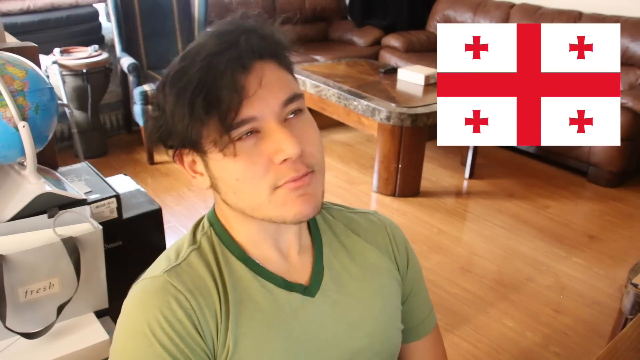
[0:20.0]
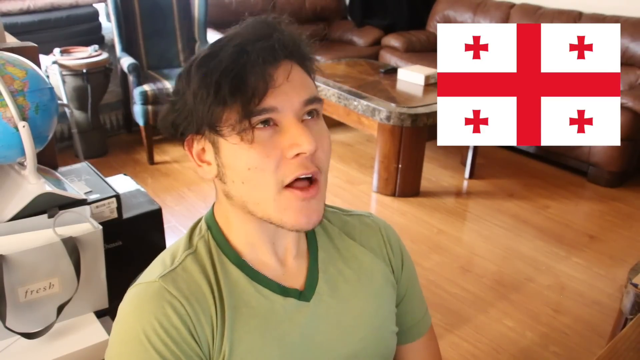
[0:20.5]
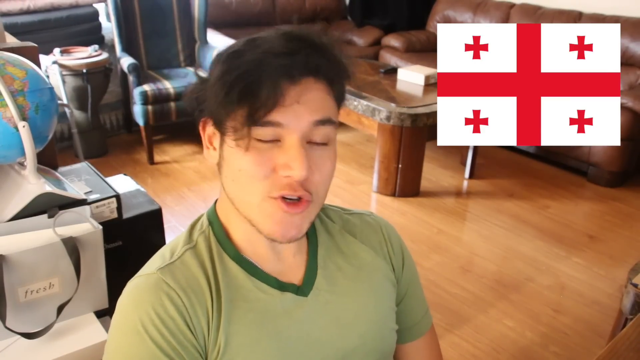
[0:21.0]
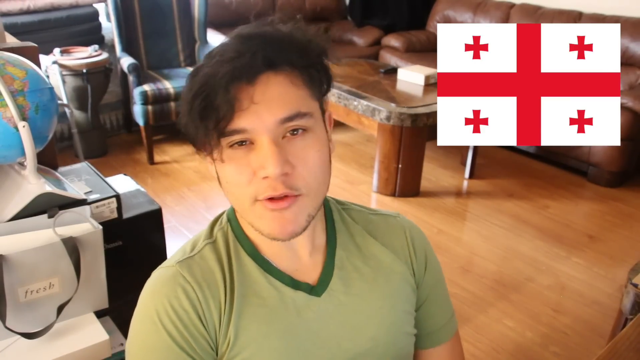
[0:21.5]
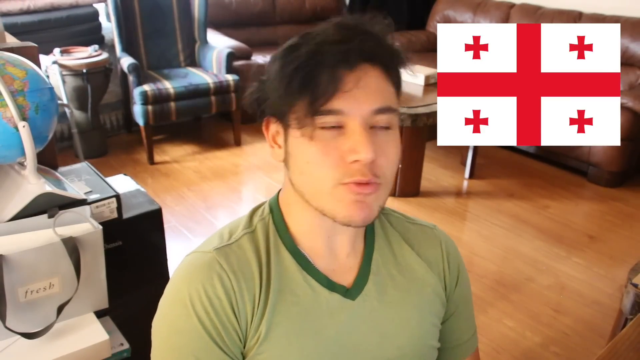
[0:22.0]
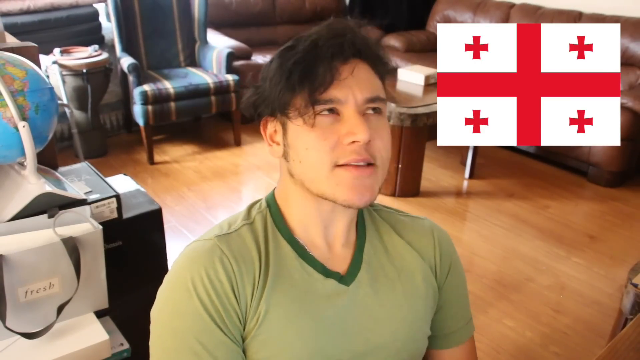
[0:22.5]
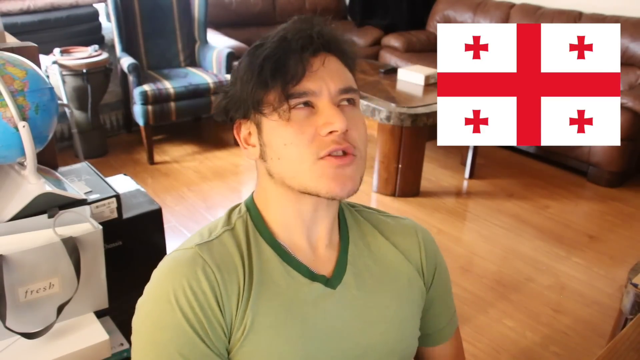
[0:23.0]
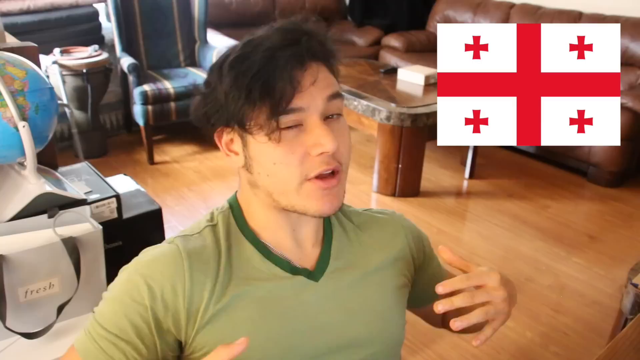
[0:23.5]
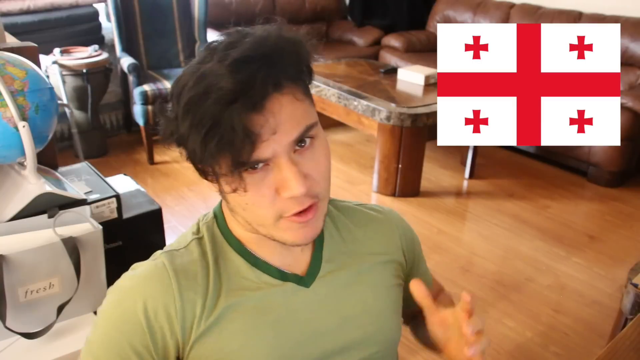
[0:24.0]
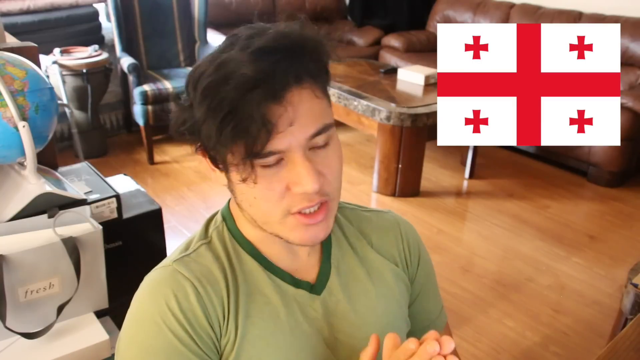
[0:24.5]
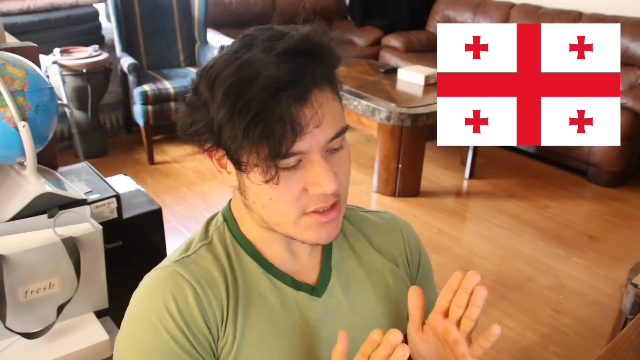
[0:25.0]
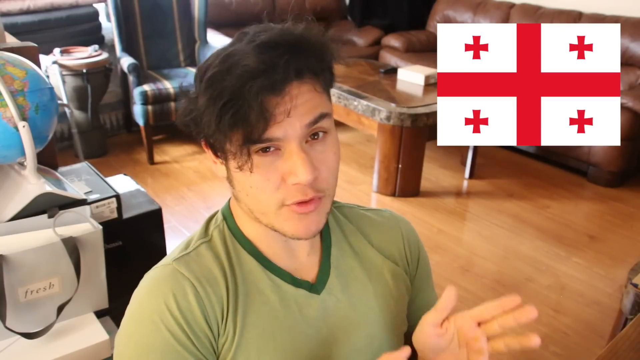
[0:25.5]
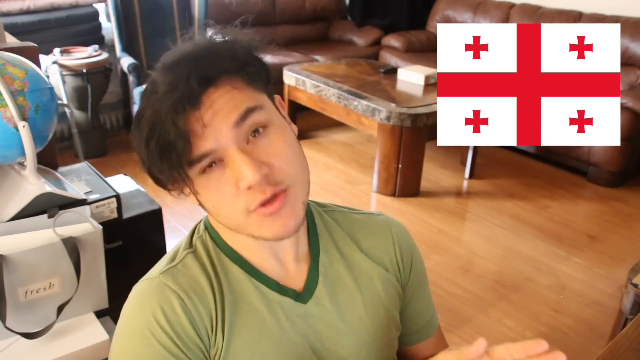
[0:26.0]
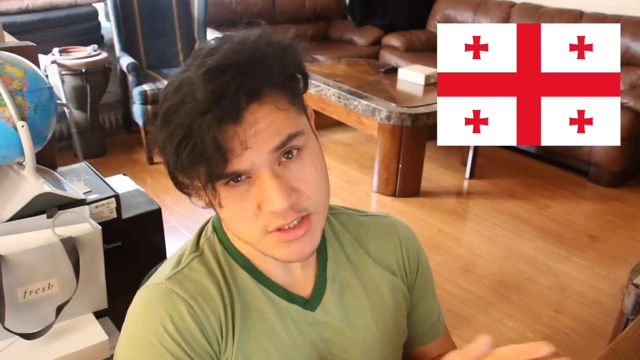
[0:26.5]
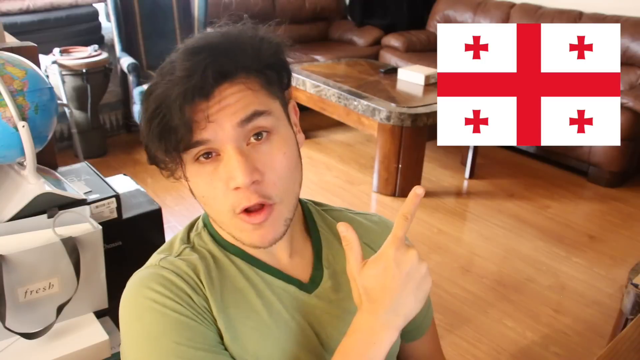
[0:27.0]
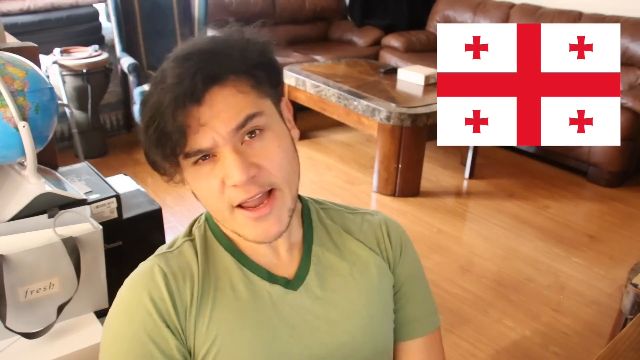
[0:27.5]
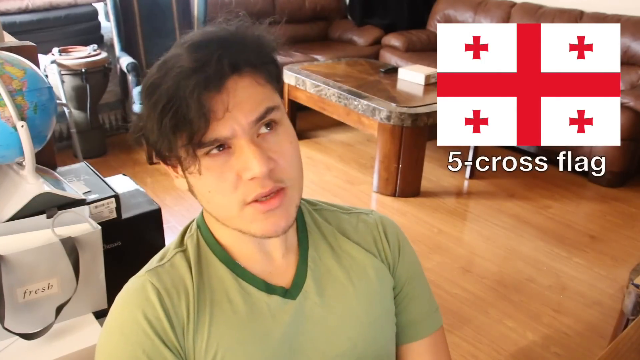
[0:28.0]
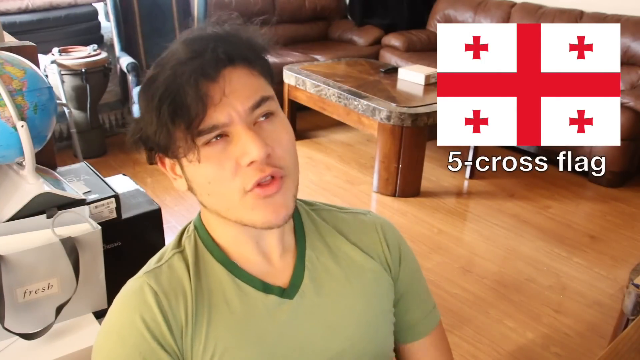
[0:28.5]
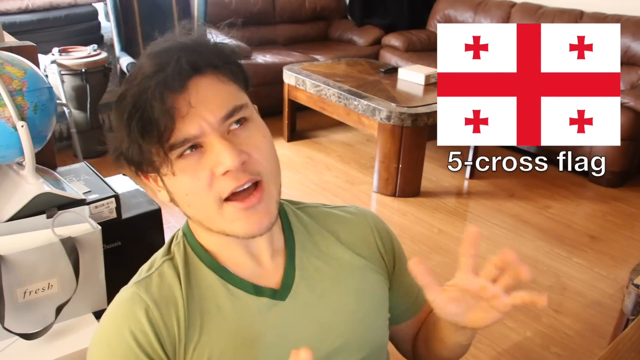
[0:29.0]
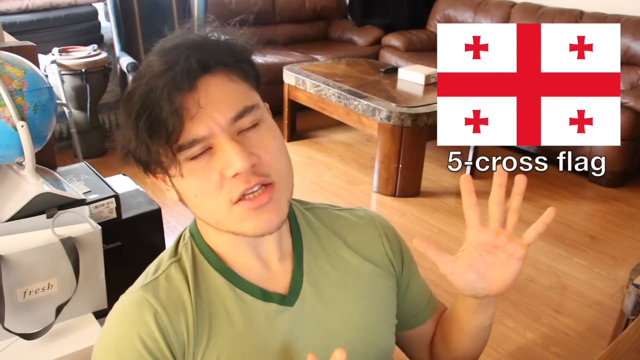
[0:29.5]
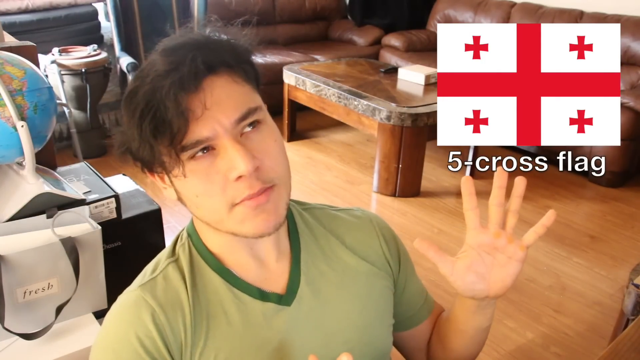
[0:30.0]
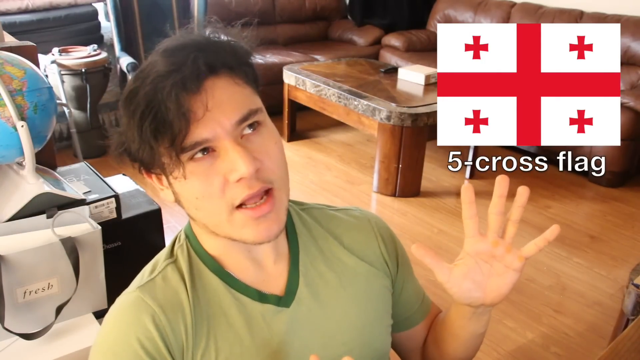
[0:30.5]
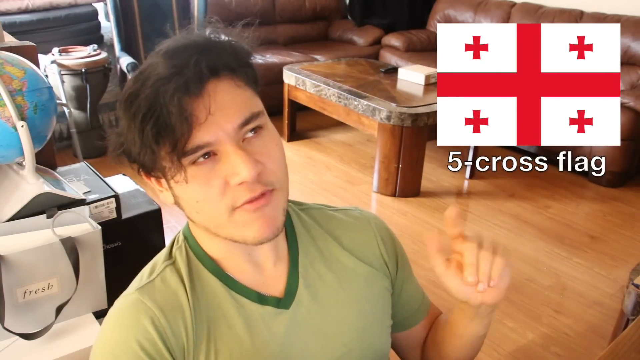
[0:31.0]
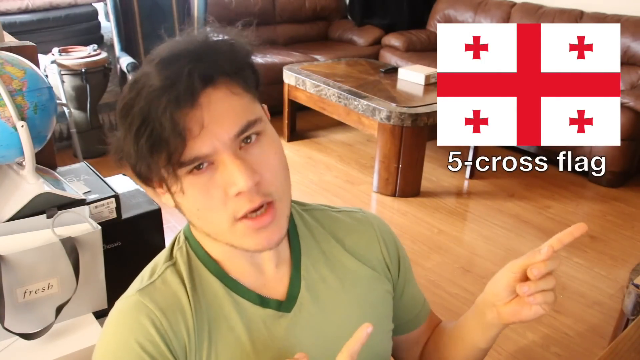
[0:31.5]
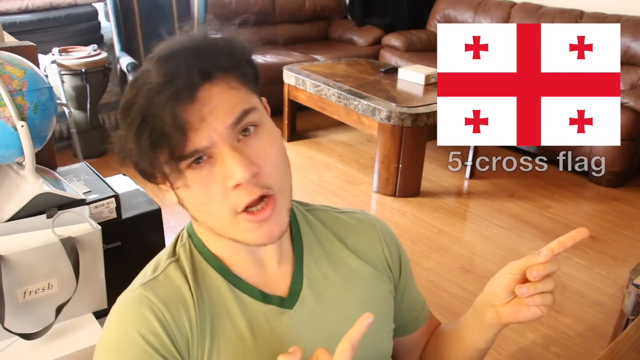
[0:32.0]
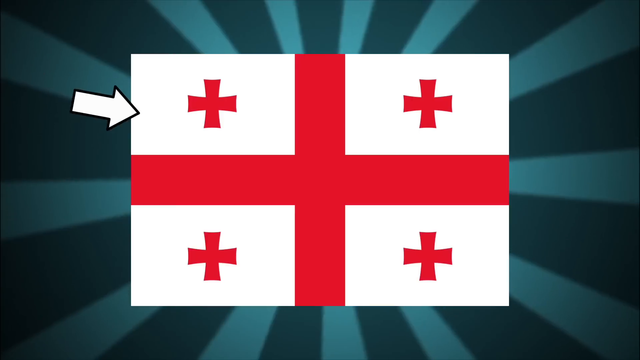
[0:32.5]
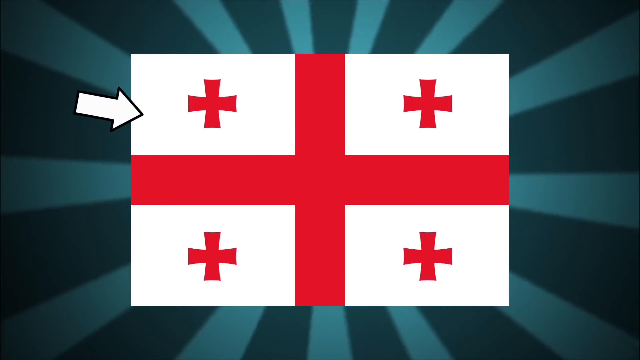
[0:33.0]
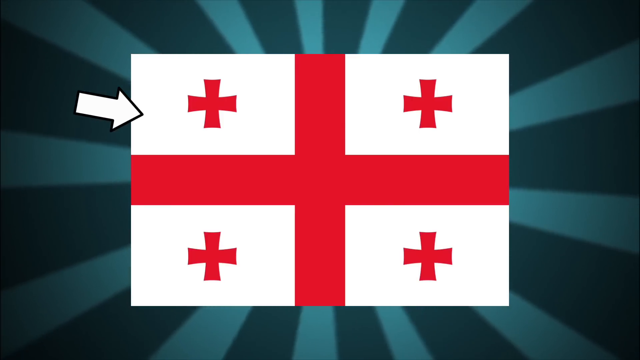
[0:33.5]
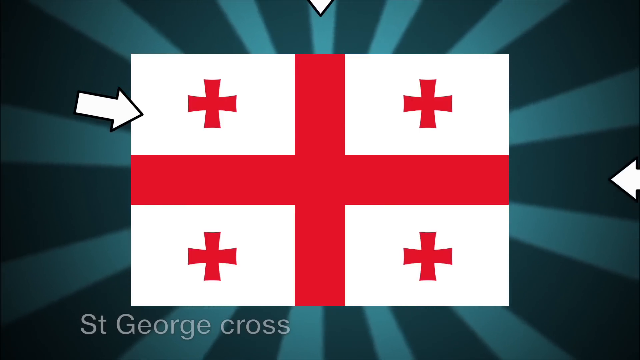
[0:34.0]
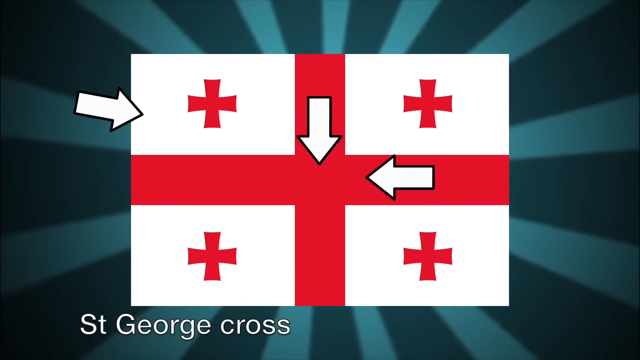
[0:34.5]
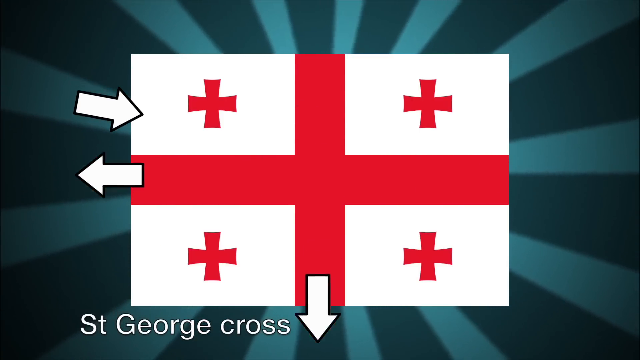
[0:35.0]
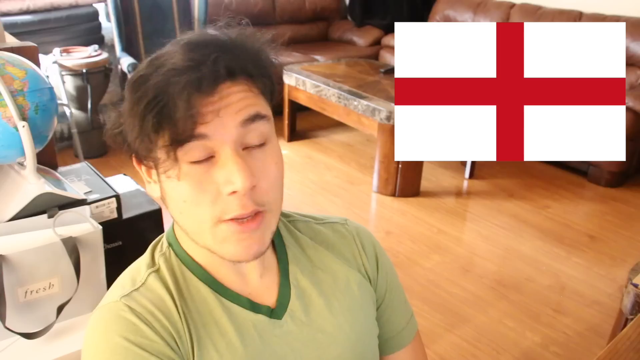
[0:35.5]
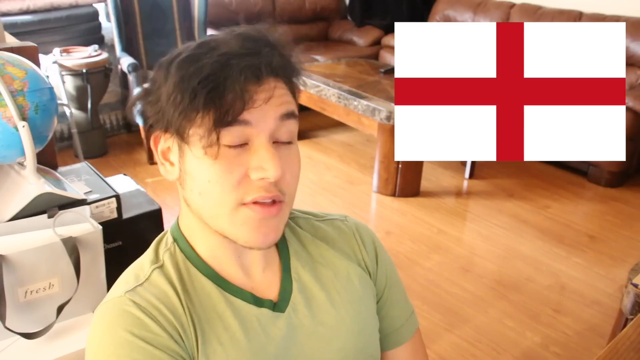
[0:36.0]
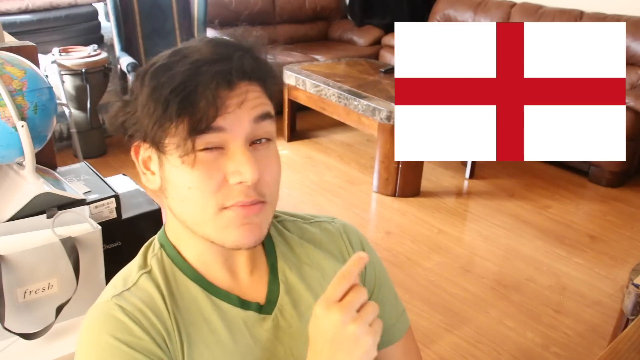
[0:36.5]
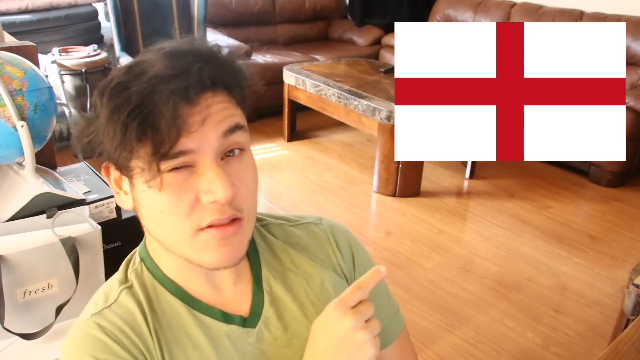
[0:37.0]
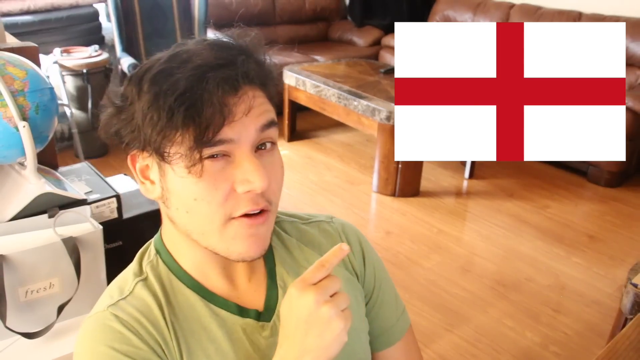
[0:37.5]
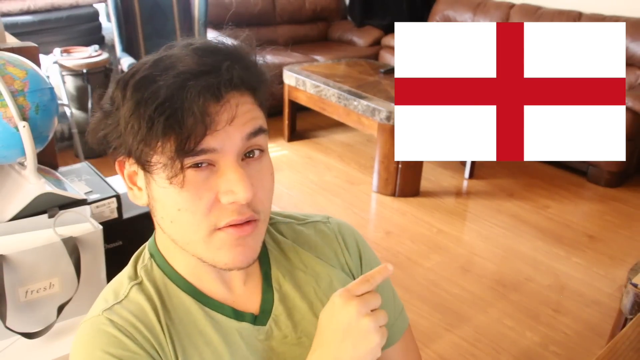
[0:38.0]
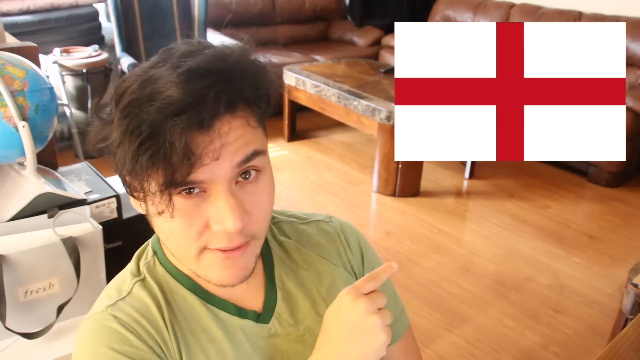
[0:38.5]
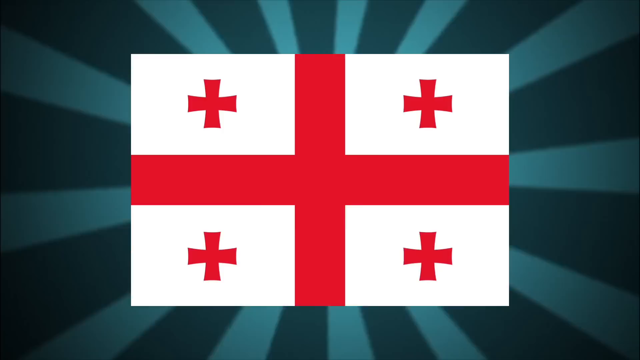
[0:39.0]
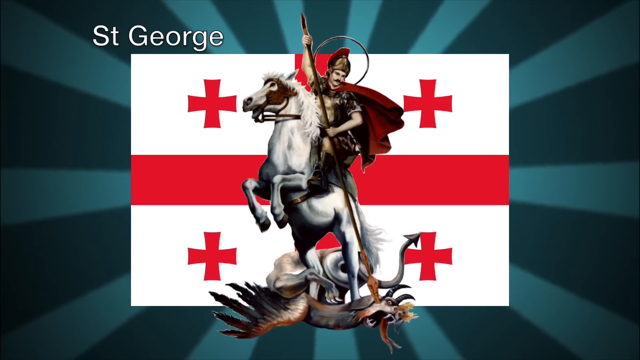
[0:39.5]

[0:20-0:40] The Asian man has long hair at the front that comes down onto his eyes, while the hair at the back appears a bit shorter. The room behind him has wooden flooring, and snippets of photos appear at the top right. A white flag with a red cross and four other crosses is shown. The man talks, using his hands as he tries to convey a message, and the words "five cross flag" appear on the screen. He raises his hands and fingers as if counting five, then points to the flag. The screen changes to show the flag with an arrow pointing at its top left. The scene then returns to the man in the green t-shirt.